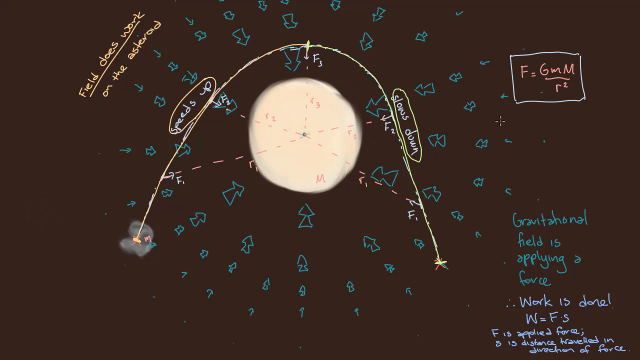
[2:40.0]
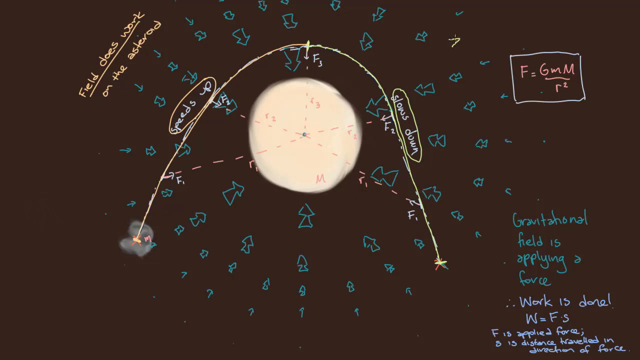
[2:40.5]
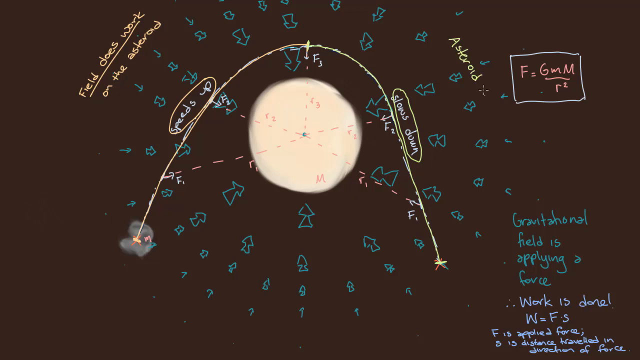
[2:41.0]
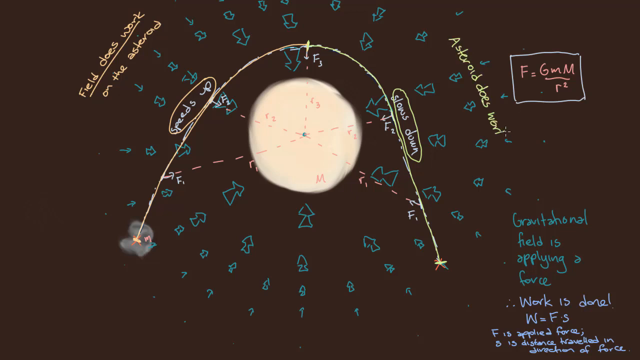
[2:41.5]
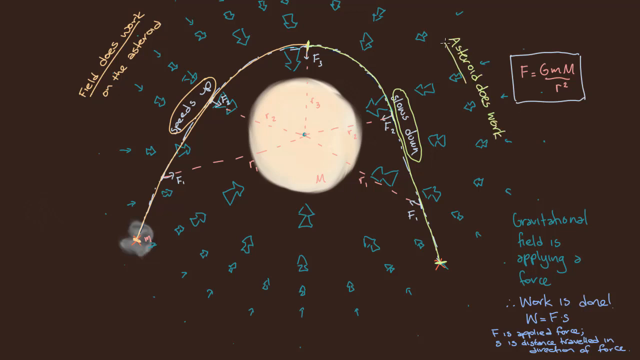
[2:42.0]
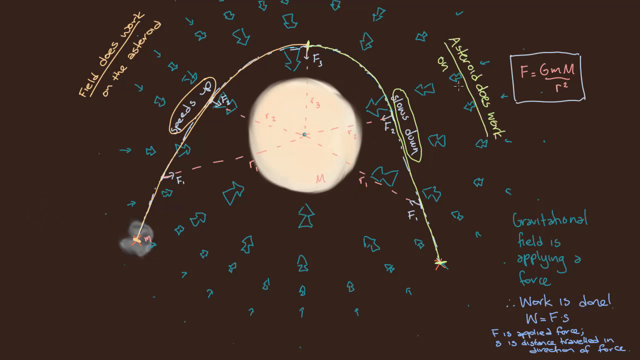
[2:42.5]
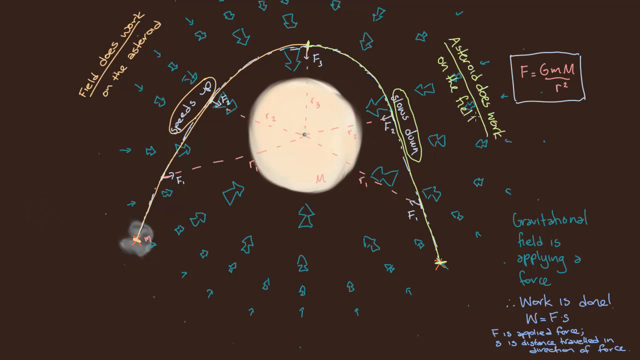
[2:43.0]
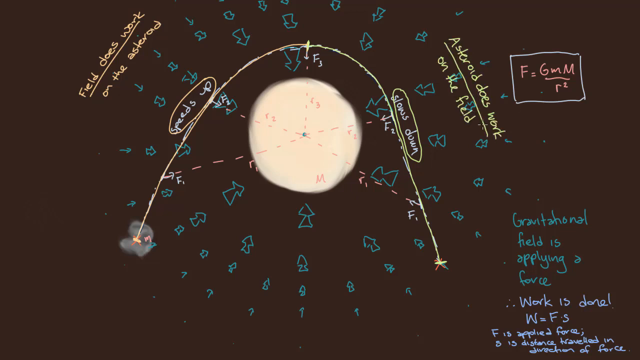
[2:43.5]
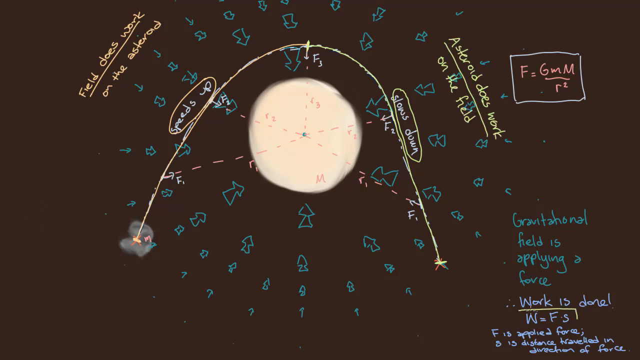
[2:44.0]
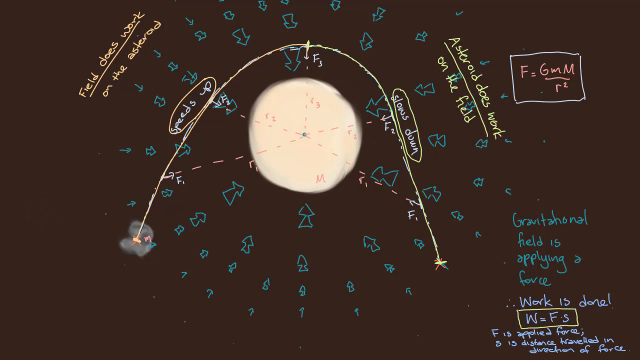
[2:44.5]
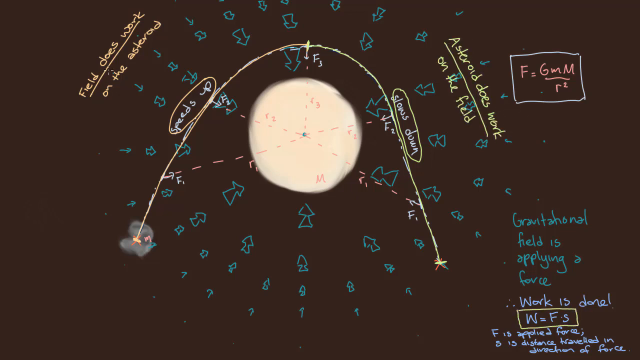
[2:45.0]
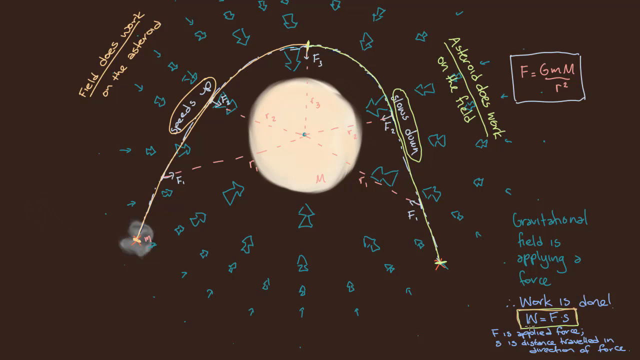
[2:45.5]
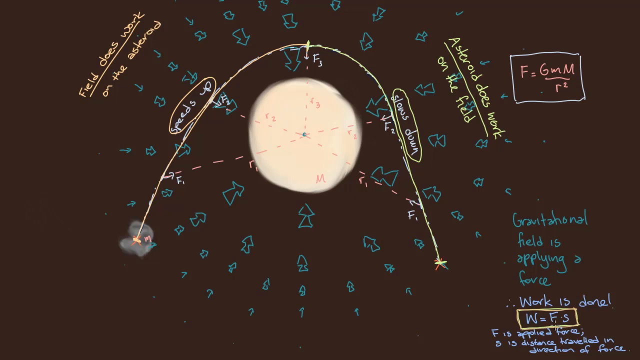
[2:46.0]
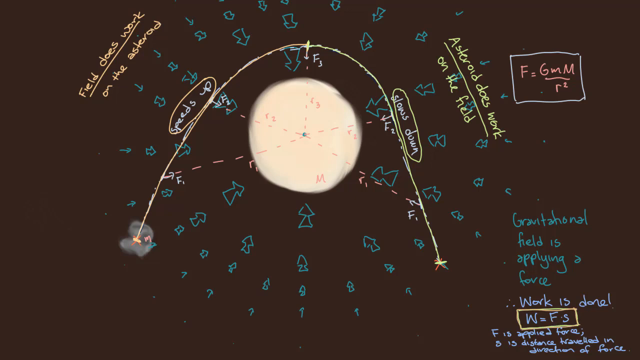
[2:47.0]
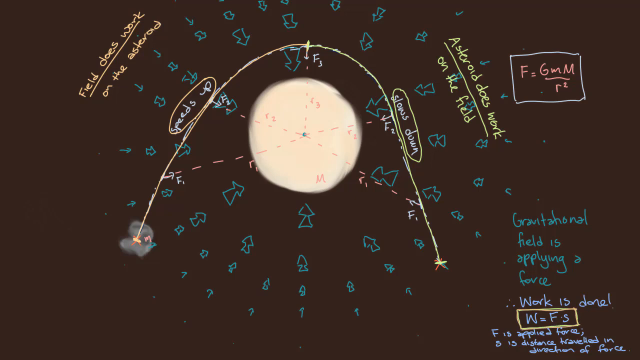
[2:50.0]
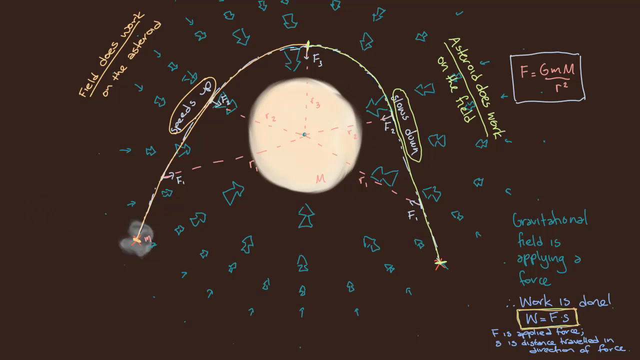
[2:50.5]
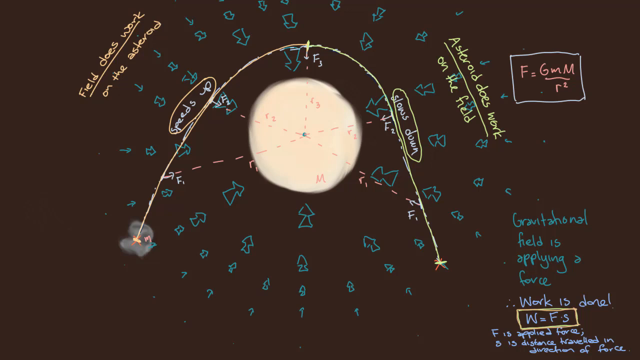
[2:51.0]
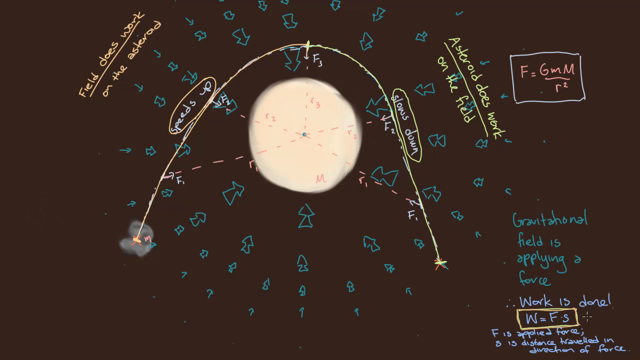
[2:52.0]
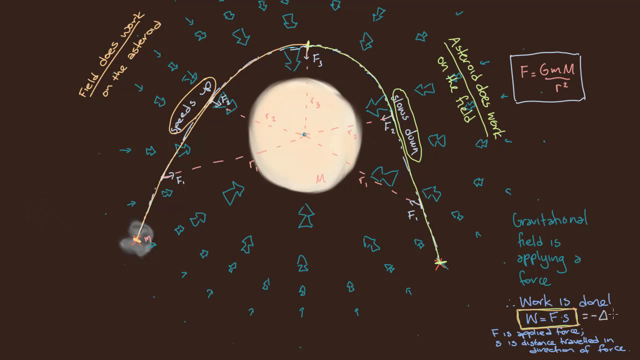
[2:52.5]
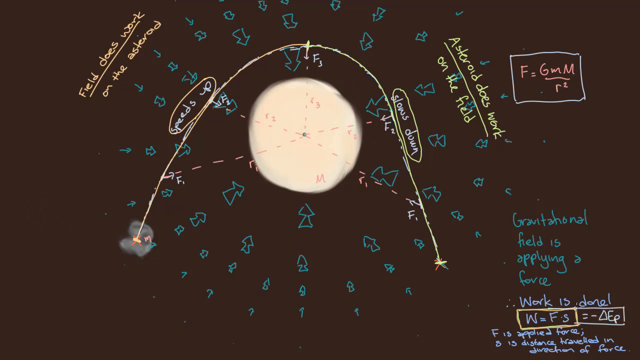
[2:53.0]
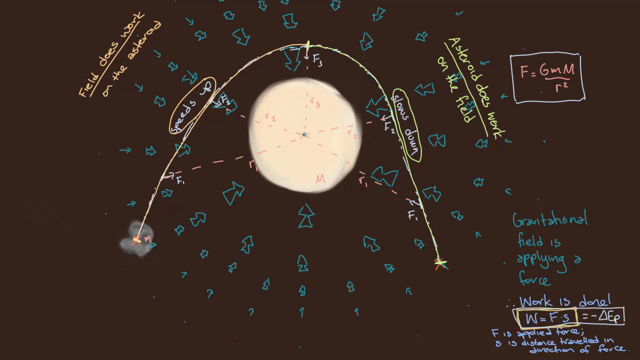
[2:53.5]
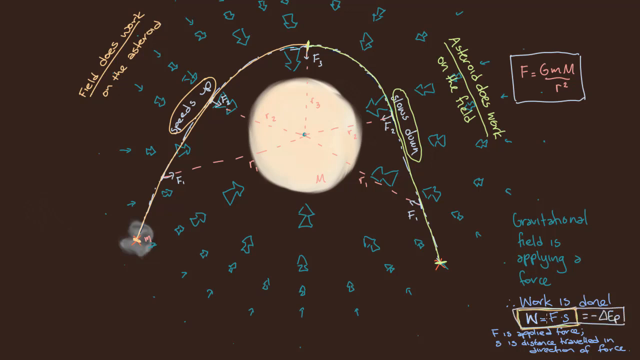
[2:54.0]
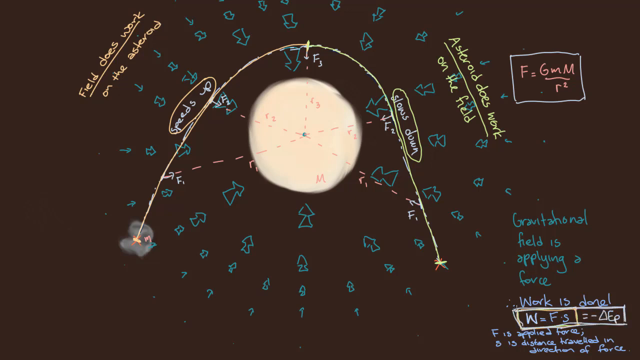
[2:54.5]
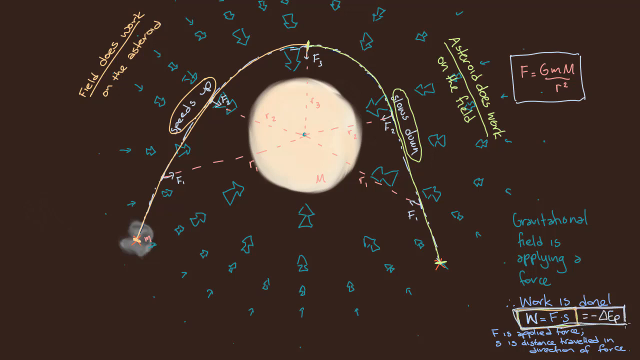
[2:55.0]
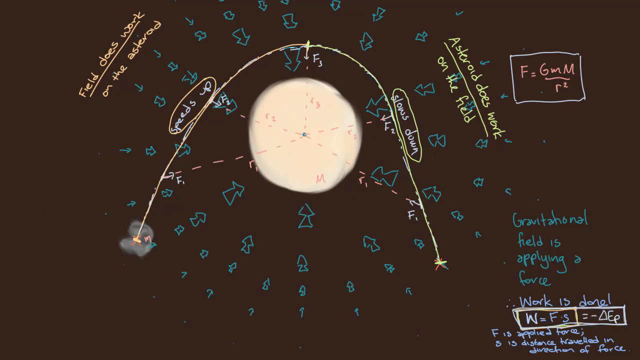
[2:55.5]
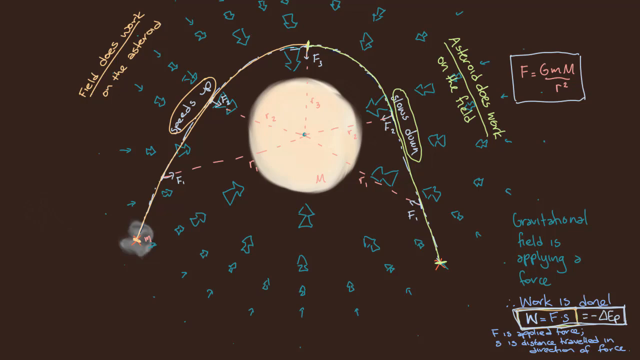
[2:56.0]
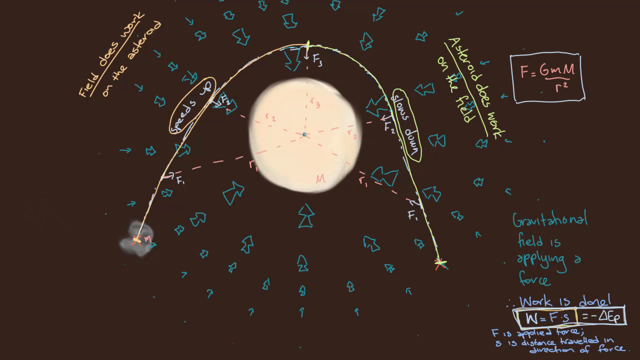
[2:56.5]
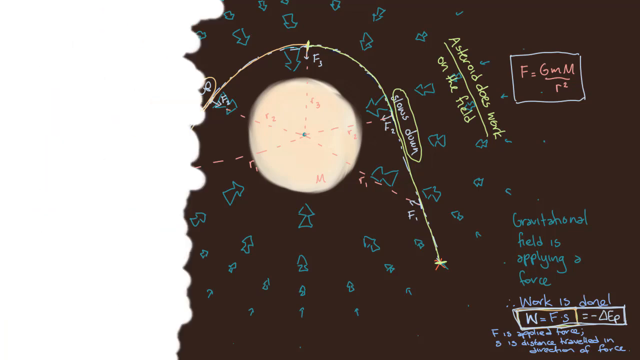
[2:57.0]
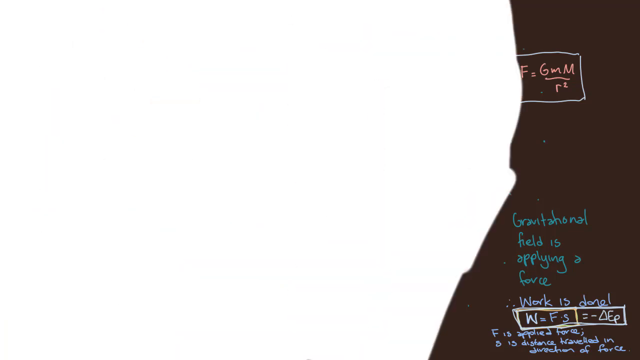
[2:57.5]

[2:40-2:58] The diagram shows gravitational energy, with a letter G representing gravity and M representing the mass of an object. The formula GPE = MGH is shown, where M is mass, G is the acceleration due to gravity, and H is height, along with an example of lifting a box and dropping it.